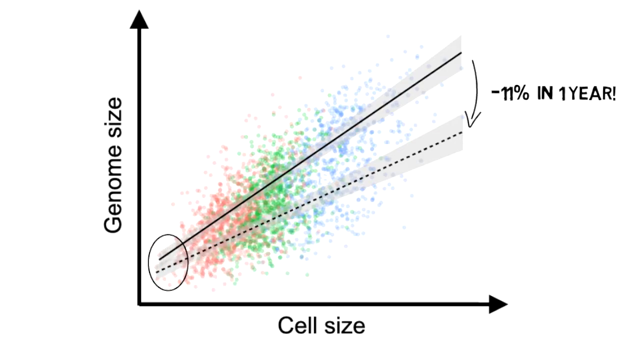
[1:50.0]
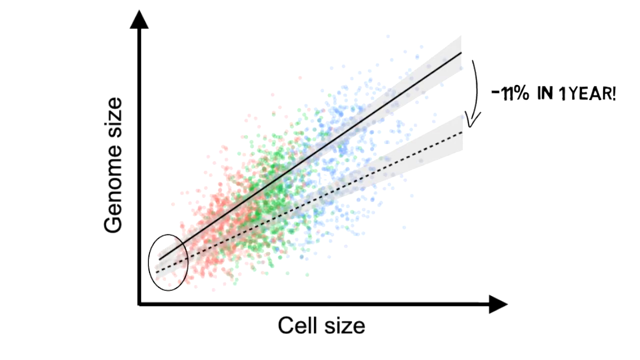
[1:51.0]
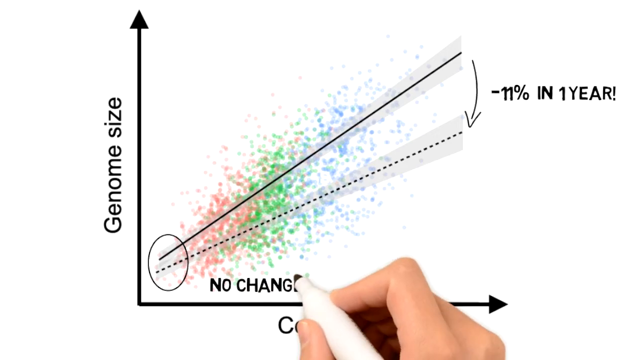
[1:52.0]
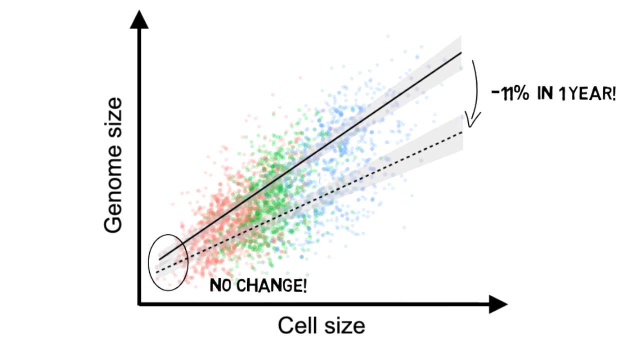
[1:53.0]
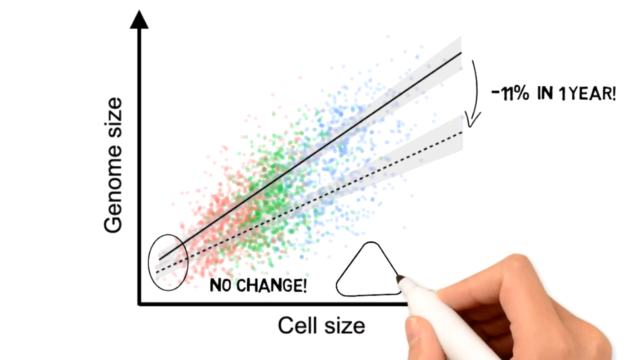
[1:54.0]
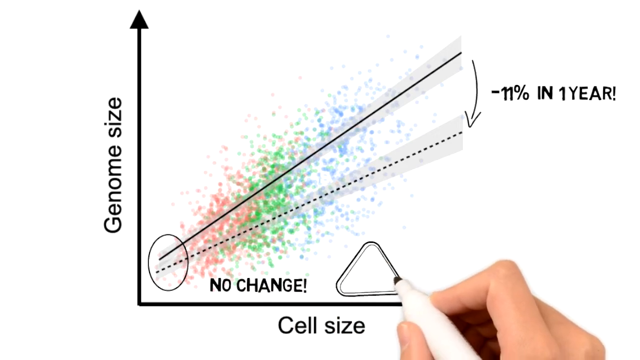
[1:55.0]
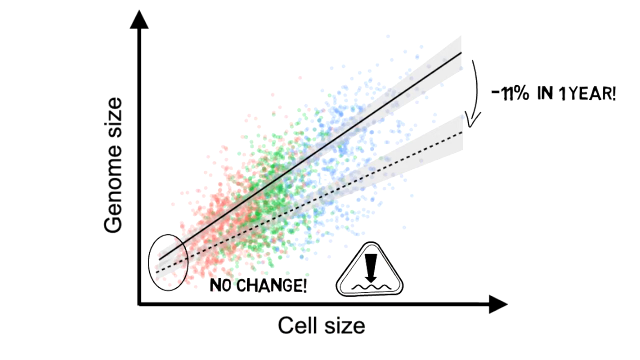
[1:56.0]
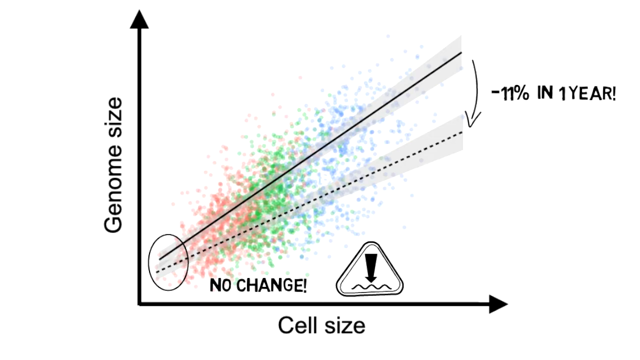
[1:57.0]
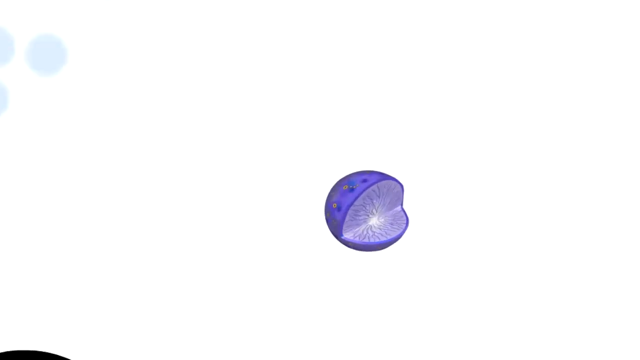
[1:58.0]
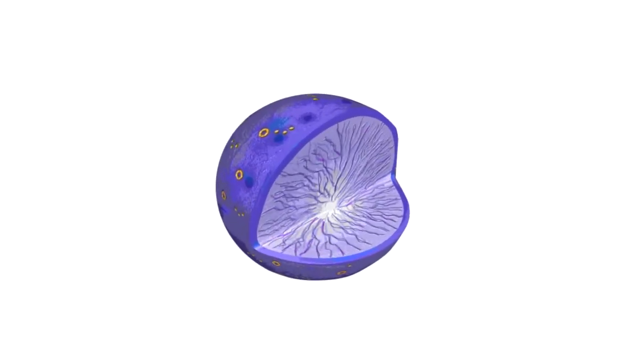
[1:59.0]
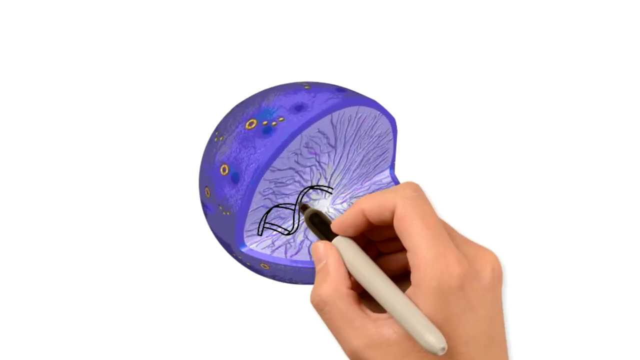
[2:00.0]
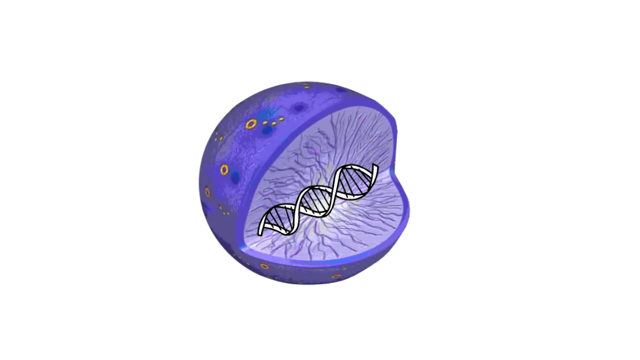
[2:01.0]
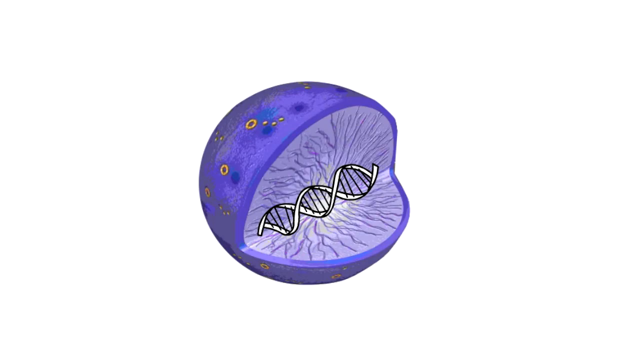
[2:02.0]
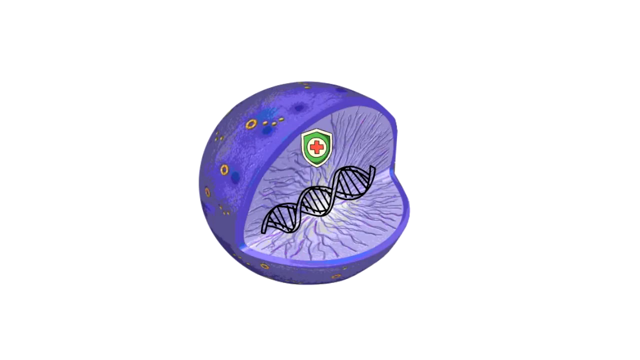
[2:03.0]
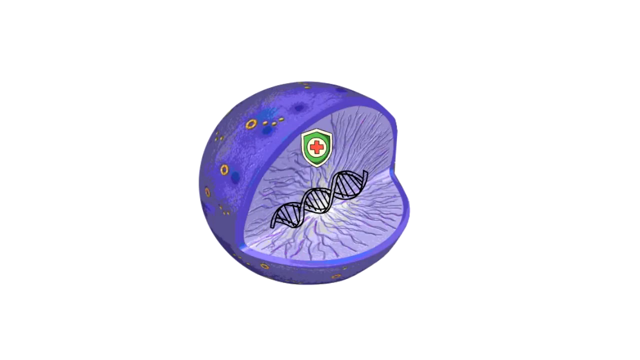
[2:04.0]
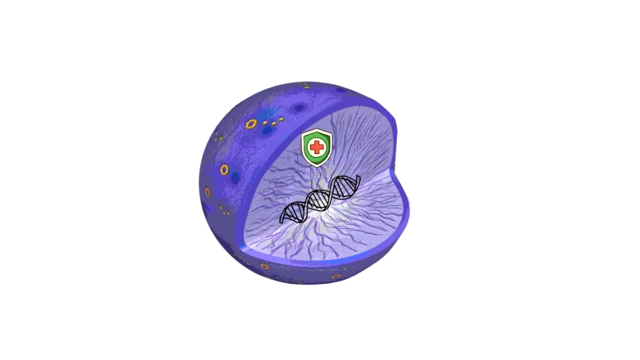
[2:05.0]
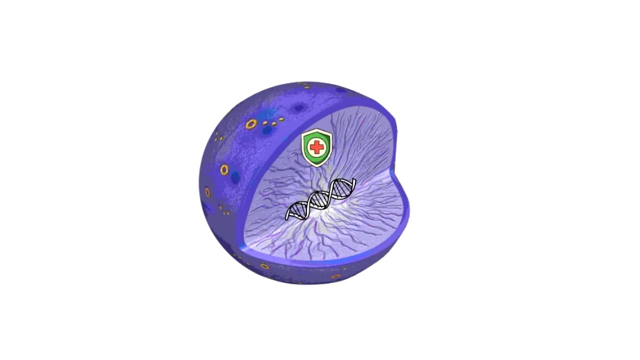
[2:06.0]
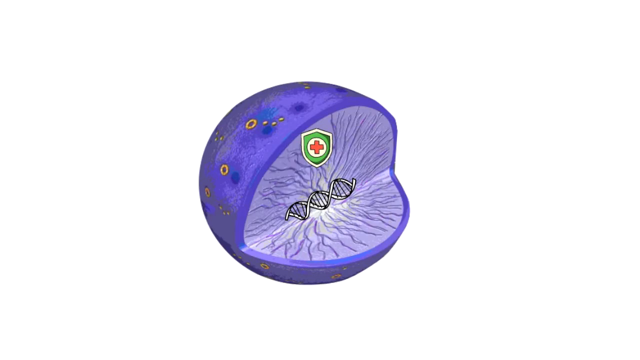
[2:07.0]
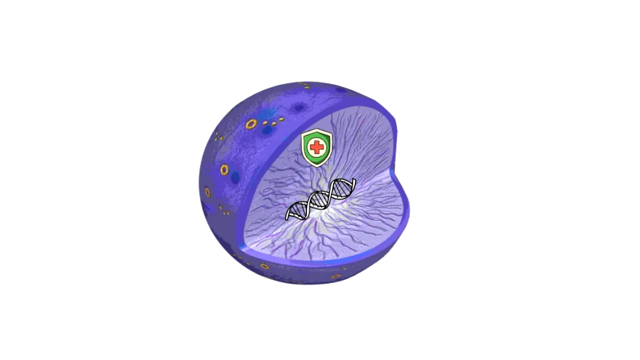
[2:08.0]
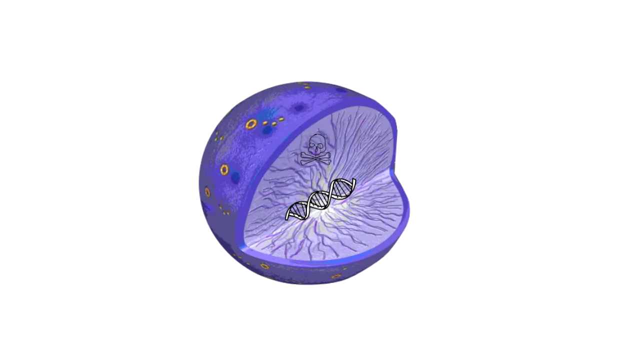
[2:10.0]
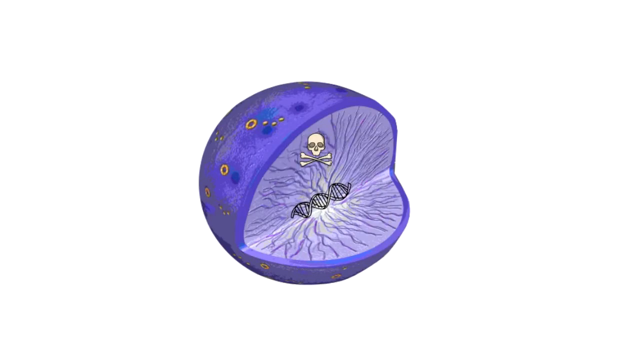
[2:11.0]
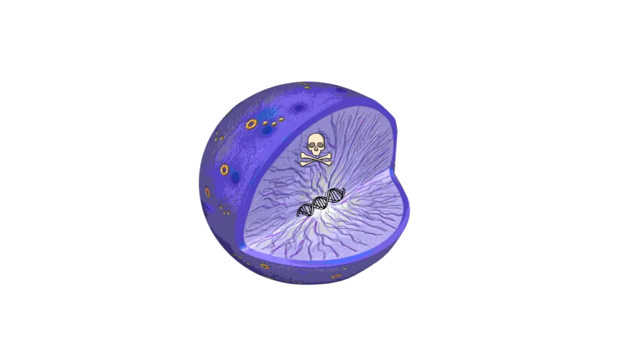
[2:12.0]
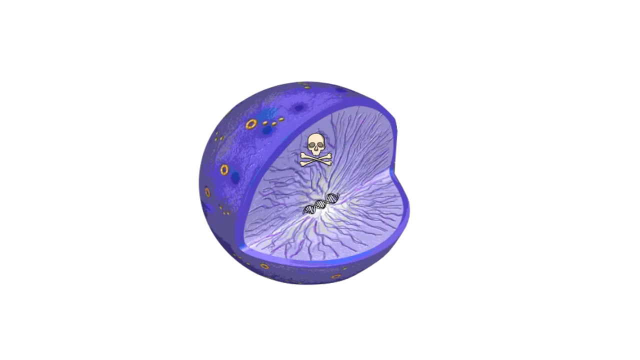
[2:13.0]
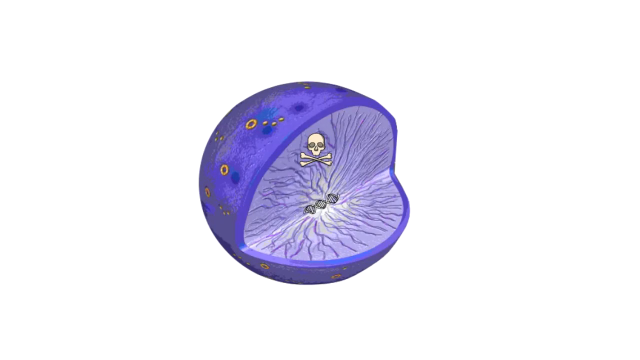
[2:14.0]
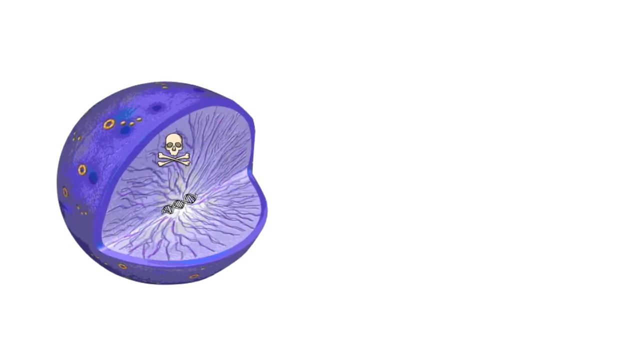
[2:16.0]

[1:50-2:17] On a white screen, "genome size" runs from bottom to top on the left side of the image, with "genome" at the bottom and "size" at the top. To its right, an arrow points to the top of the screen, with a line going down to the bottom that makes a 90-degree angle to the right, ending in another arrow. Within the corner is a black circle. A solid white line runs diagonally from the bottom left to the top right, and below it a dotted line runs from the bottom left to the top right at a slight angle. Pink dots are over the bottom left of these lines; in the middle the dots turn green, and toward the end of the lines they turn blue. Next to where the lines end at the top right is "minus 11 percent in one year". A person's right hand appears holding a white marker and writes "no change", then draws something like a yield sign. Next, a purple cell that has been split is shown; it looks like a sphere. He draws a DNA strand within the sphere, and a green shield with a red cross appears above the DNA strand. The shield turns into a skull and crossbones. The DNA strand shrinks smaller and smaller into the center of the cell, and the cell moves to the left.